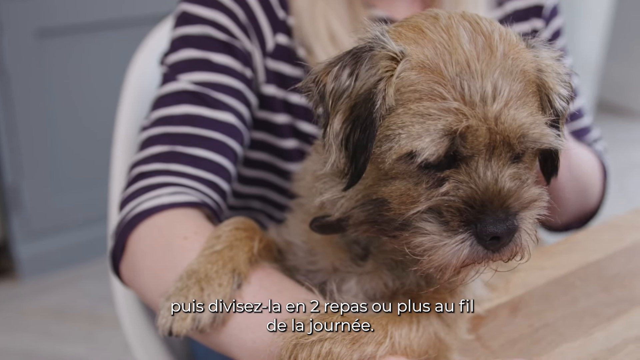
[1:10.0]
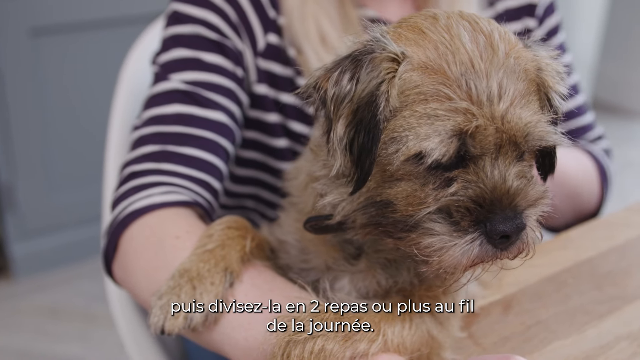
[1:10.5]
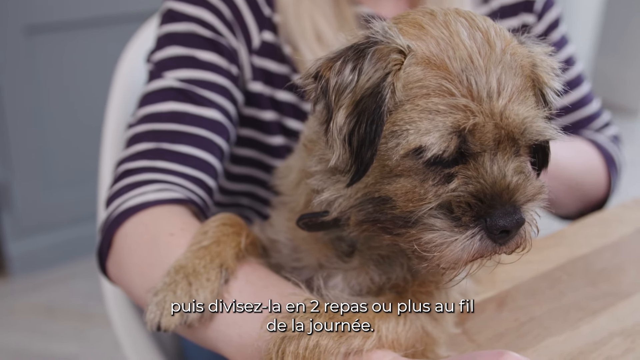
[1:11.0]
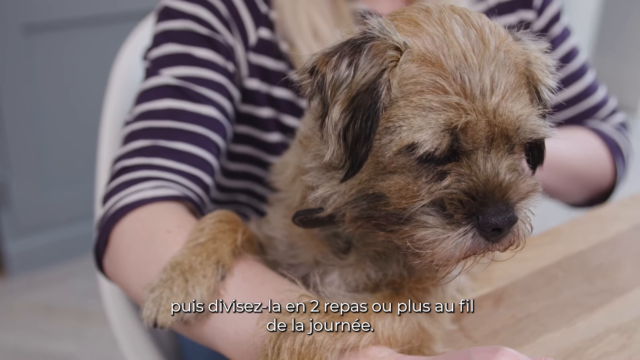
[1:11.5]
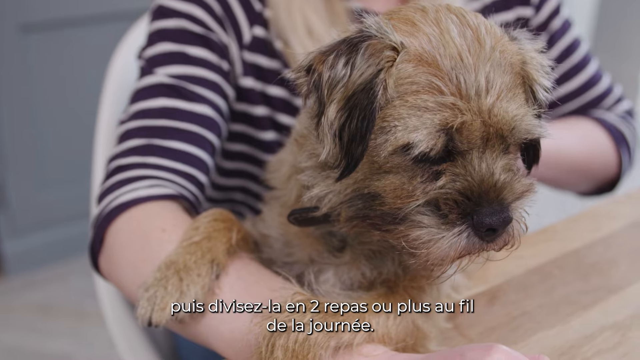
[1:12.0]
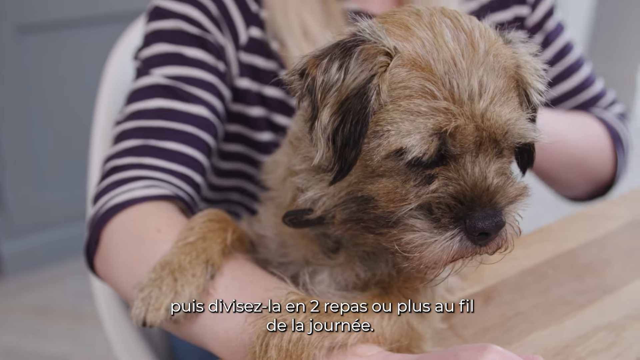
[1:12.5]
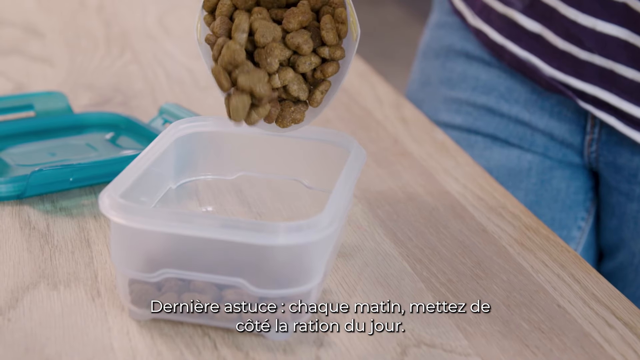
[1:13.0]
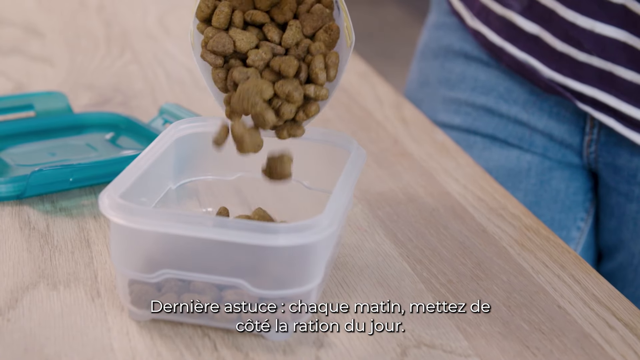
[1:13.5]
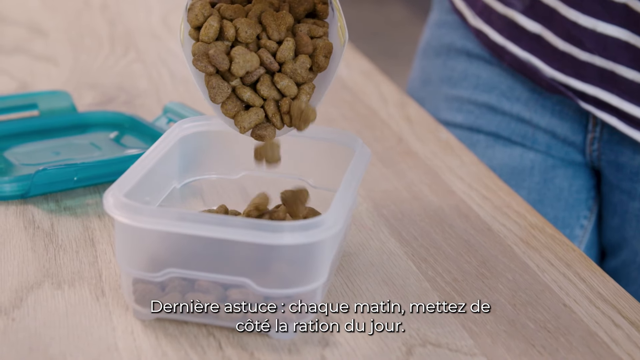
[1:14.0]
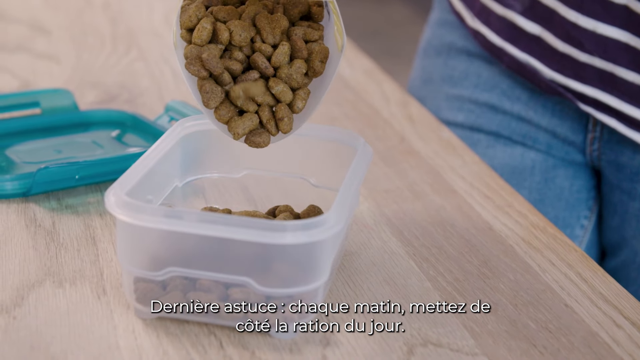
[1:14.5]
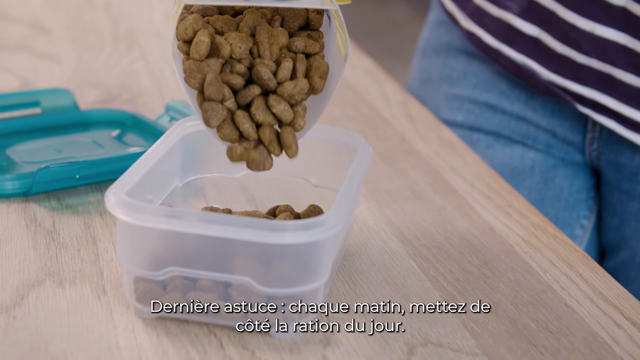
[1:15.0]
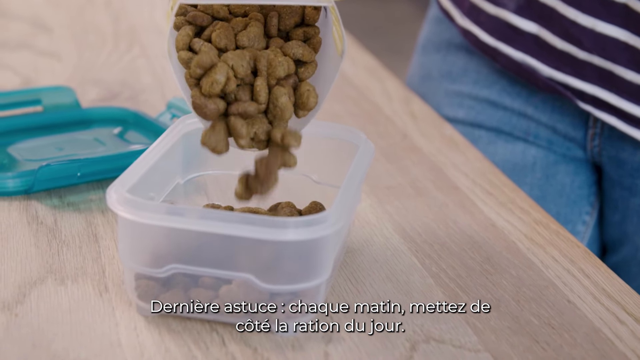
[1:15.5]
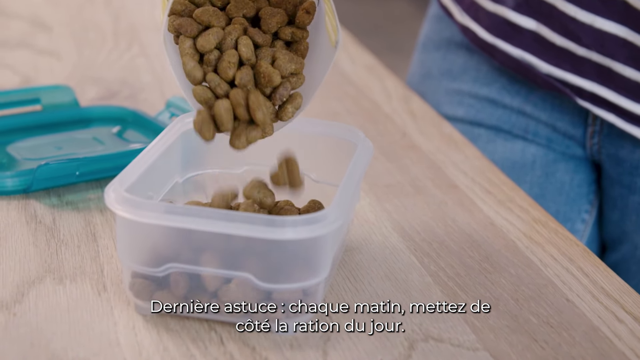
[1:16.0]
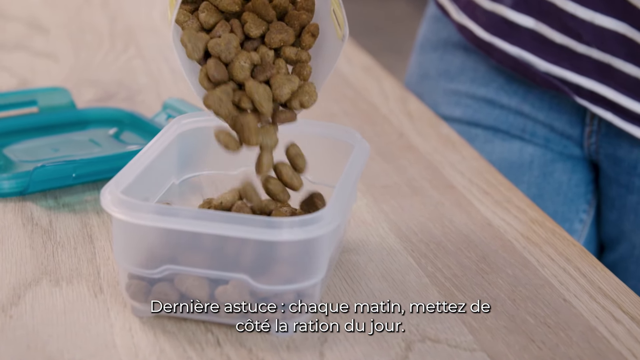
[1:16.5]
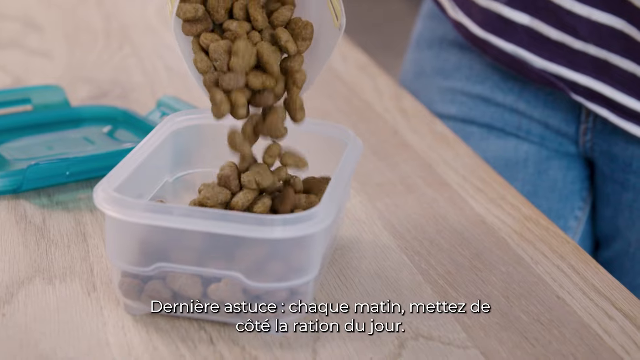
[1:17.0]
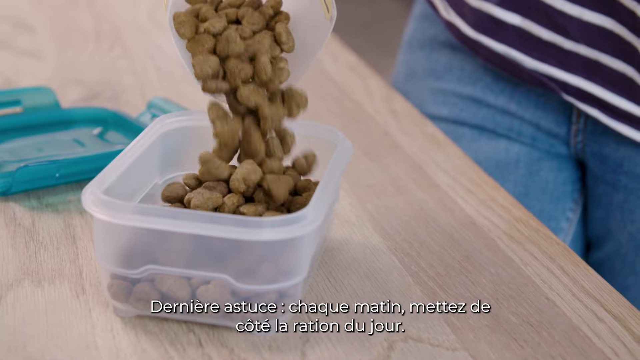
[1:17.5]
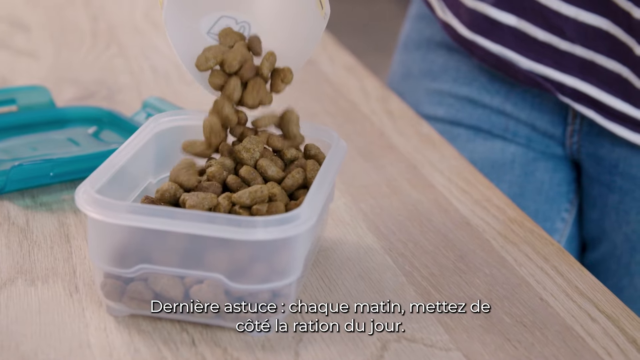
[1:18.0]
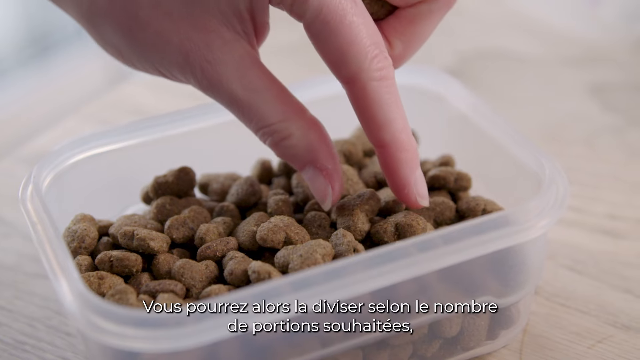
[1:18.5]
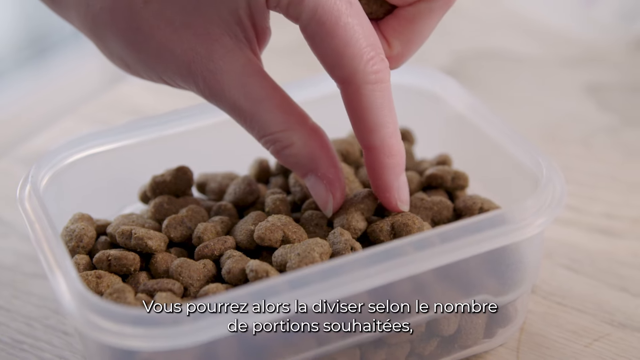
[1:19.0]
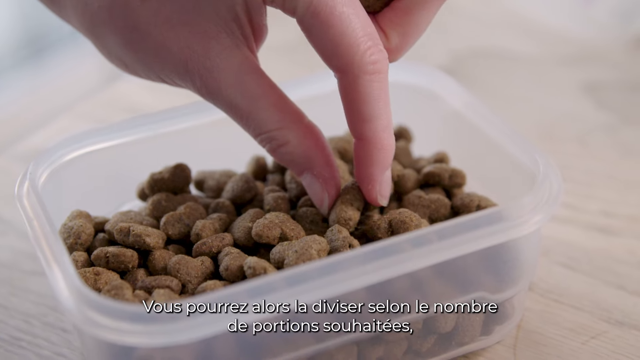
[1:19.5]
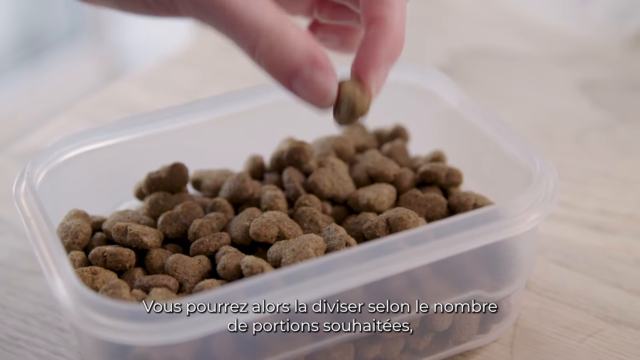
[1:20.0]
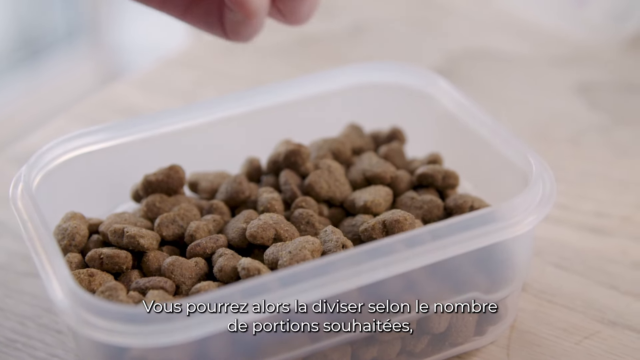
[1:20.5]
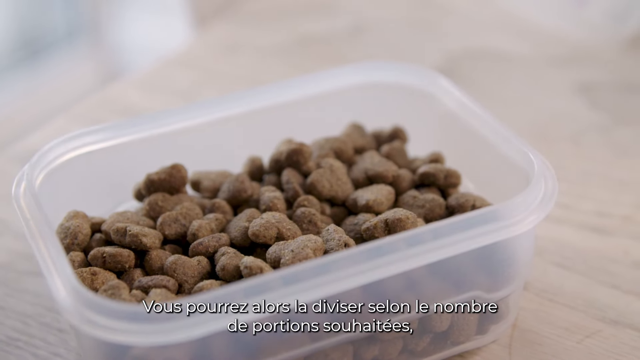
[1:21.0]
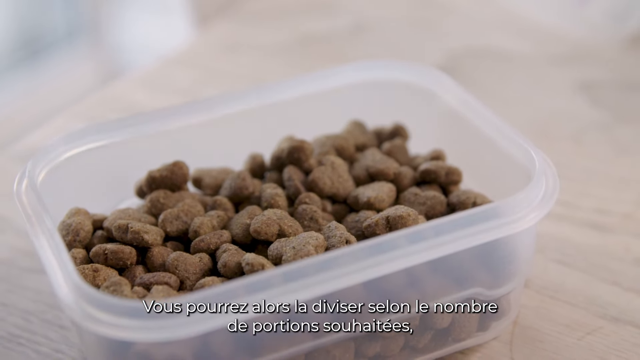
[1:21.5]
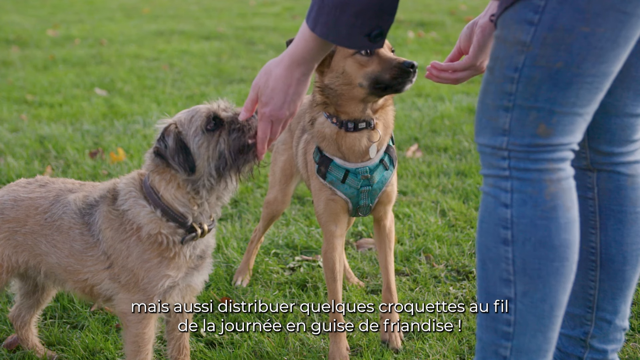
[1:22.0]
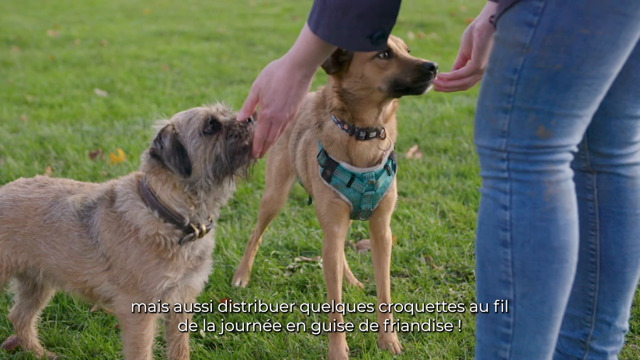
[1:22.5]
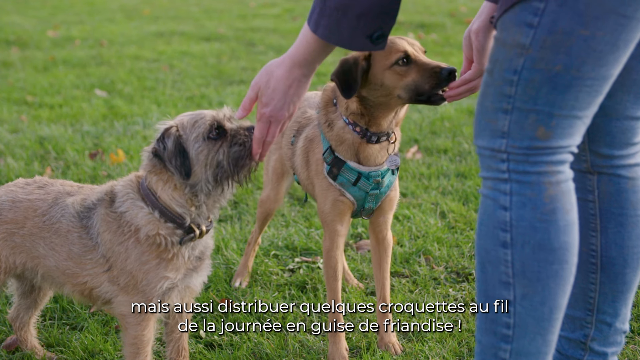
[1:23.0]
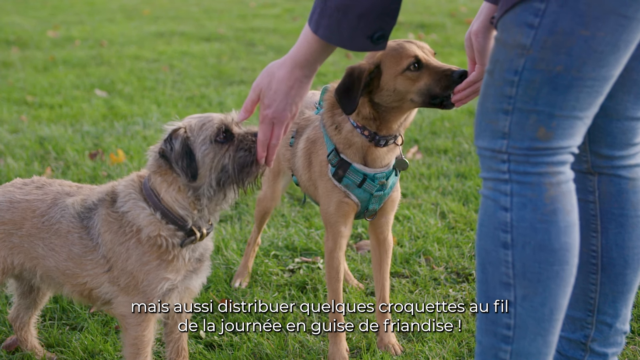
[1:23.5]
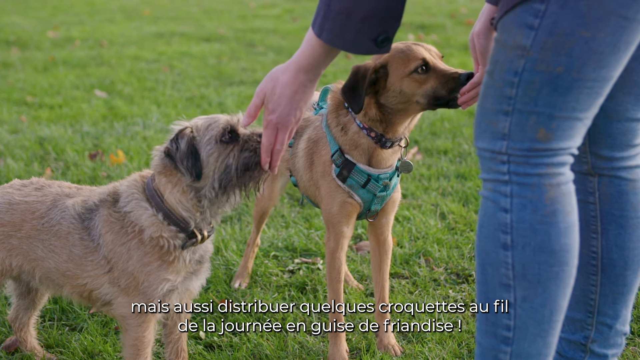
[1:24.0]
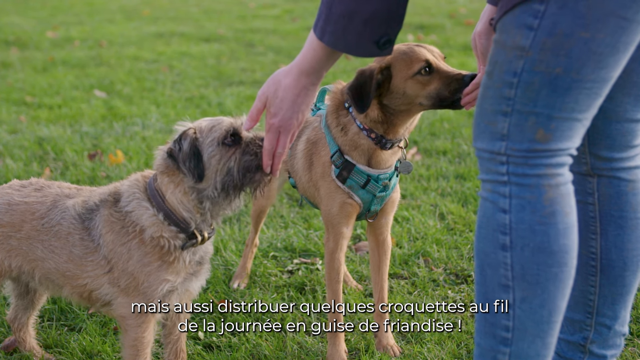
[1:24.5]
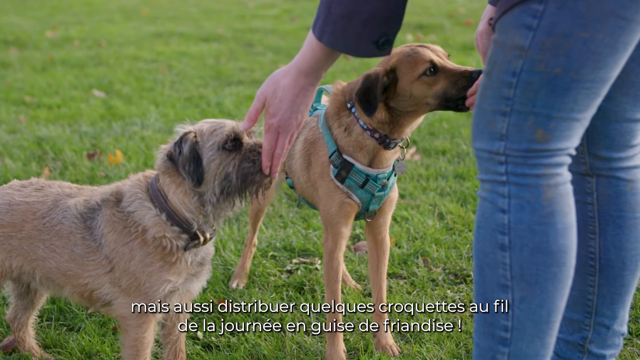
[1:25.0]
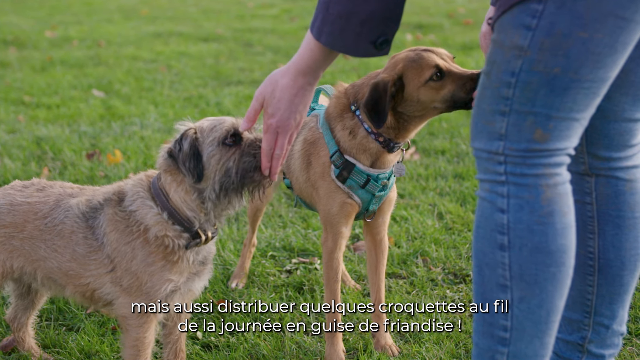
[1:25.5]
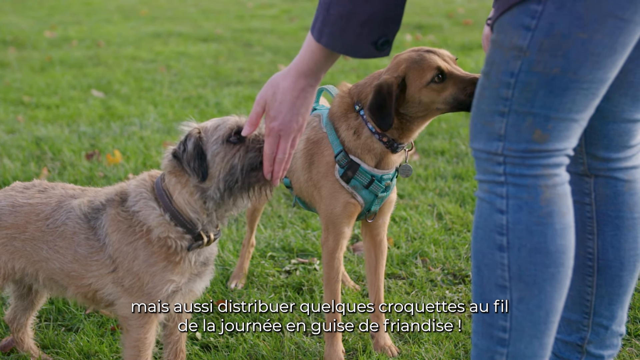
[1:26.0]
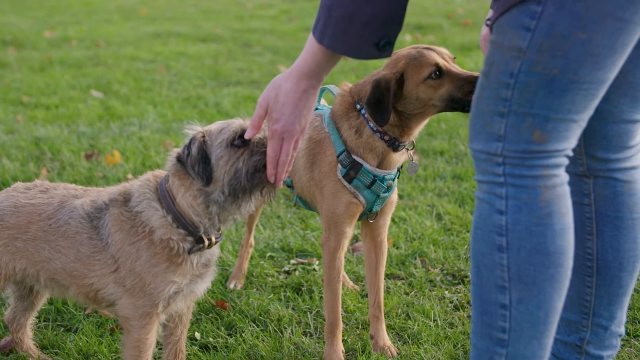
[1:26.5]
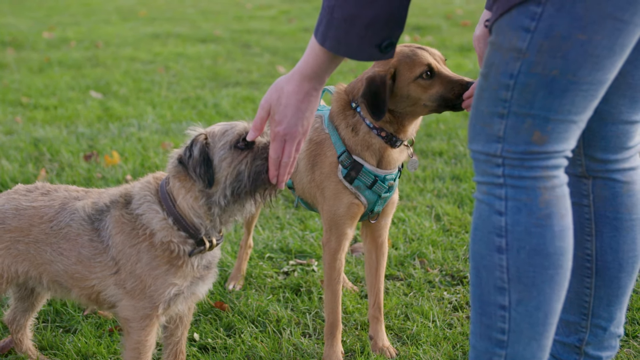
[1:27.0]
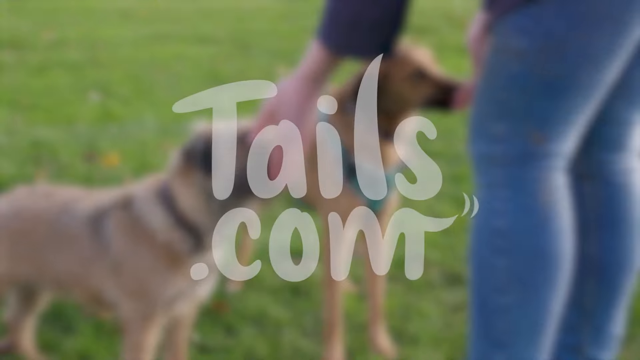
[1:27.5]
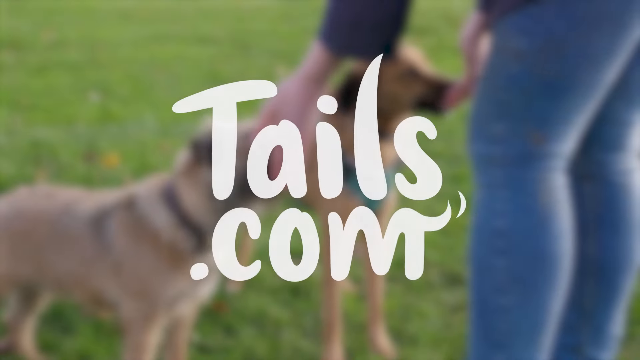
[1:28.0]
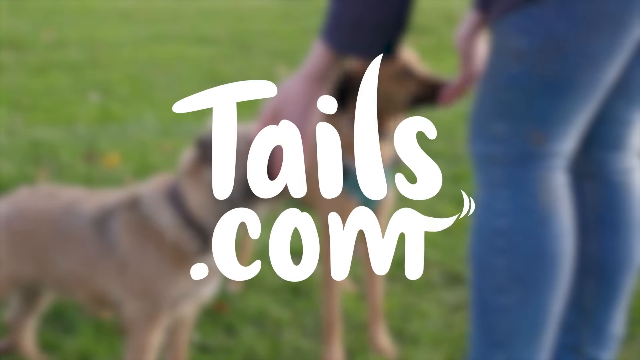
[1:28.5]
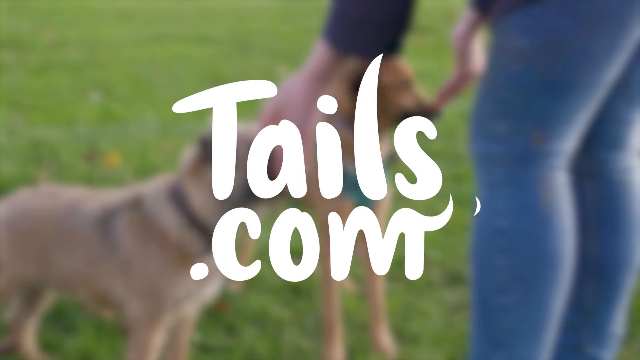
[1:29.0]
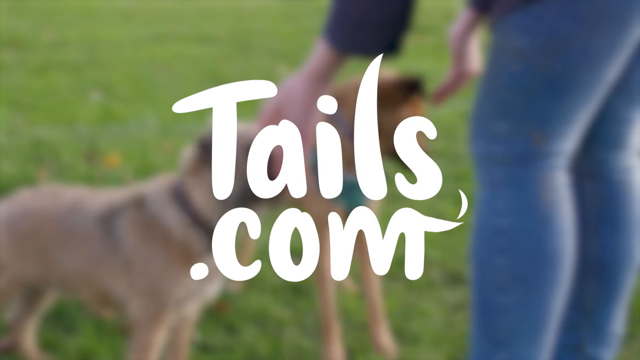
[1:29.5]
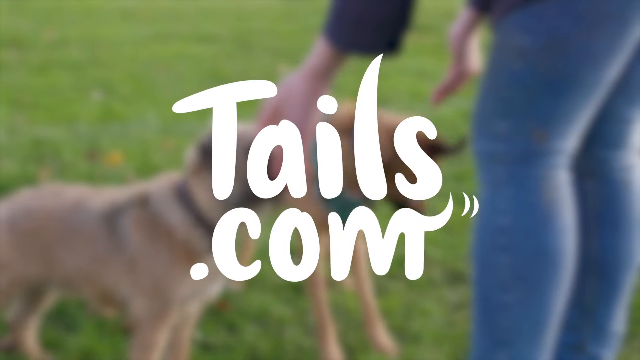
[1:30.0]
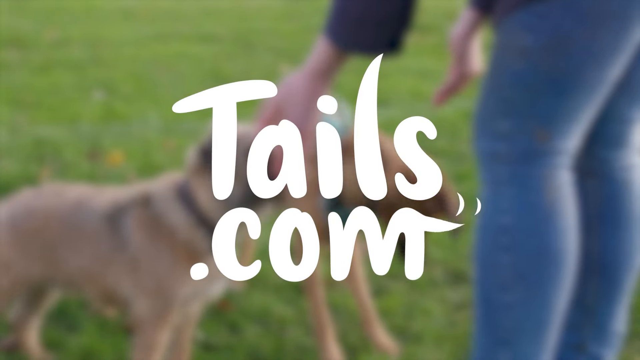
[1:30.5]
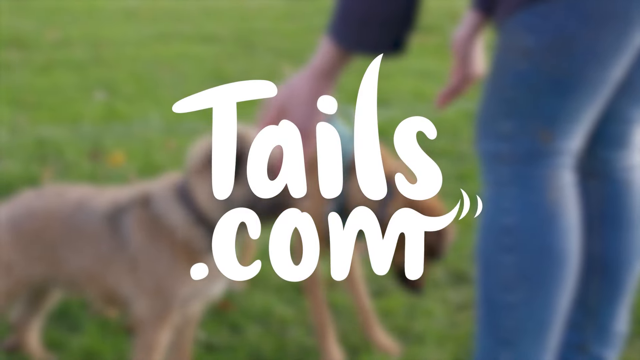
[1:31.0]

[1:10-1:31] A close-up shows a small, scruffy-looking light brown dog sitting on the lap of somebody who is sitting in a chair. The scene changes to a wooden kitchen worktop with a rectangular plastic Tupperware box on it. Somebody pours dry dog biscuits from a plastic jug into the box and then picks one of the biscuits up from inside it. The scene then moves outside to some green grass, where two dogs, a small scruffy light brown dog and a medium-sized tan-coloured dog, are with a person standing in front of them; only the person's legs and hands are in the shot. The person holds something up towards the dogs' mouths and the dogs eat from their hands. A text overlay appears with the words "tails.com" across the screen, and the m in the ".com" has a waggy tail.